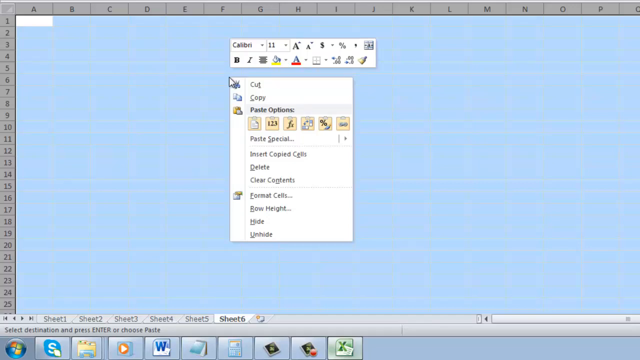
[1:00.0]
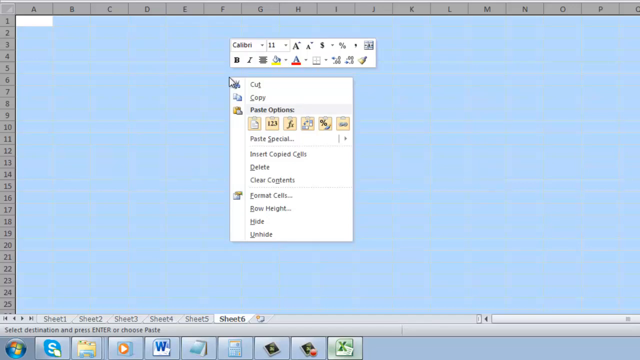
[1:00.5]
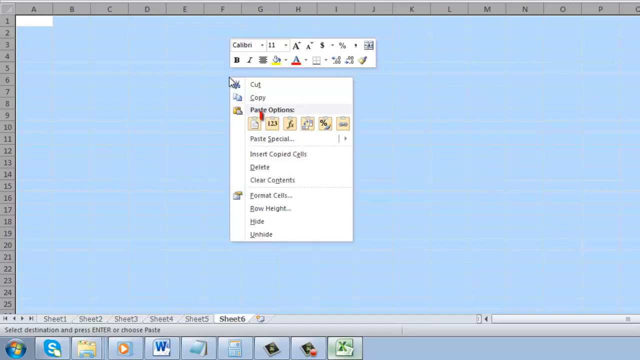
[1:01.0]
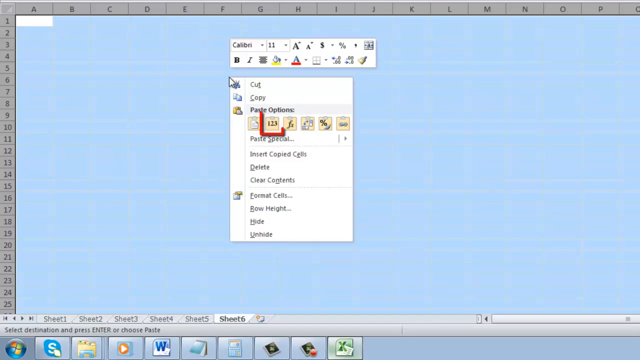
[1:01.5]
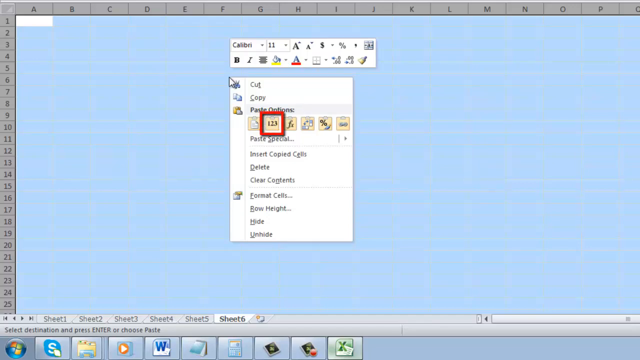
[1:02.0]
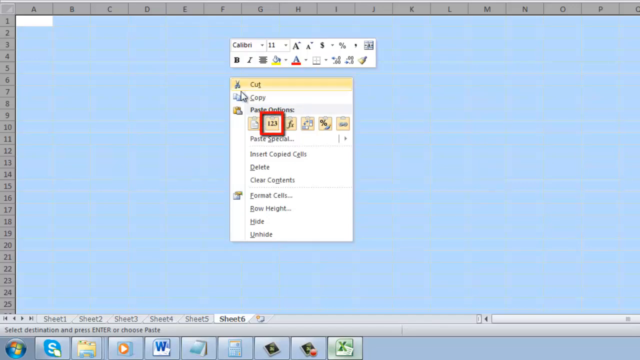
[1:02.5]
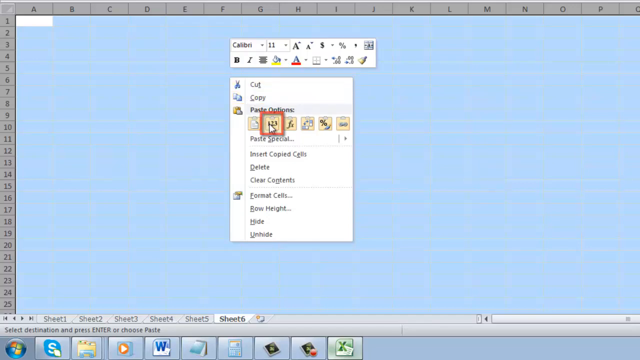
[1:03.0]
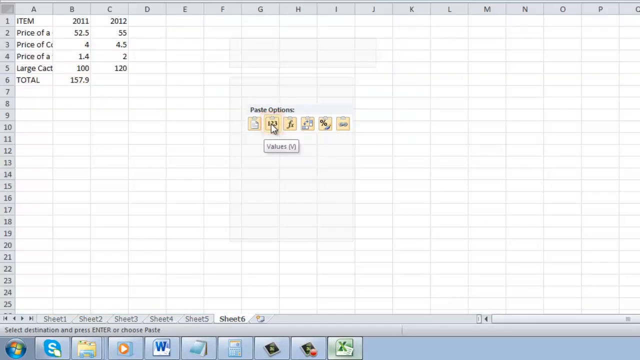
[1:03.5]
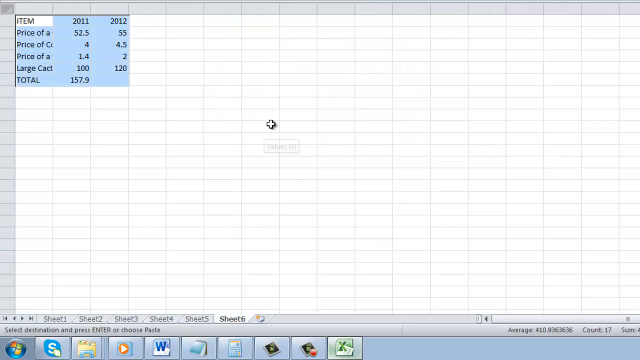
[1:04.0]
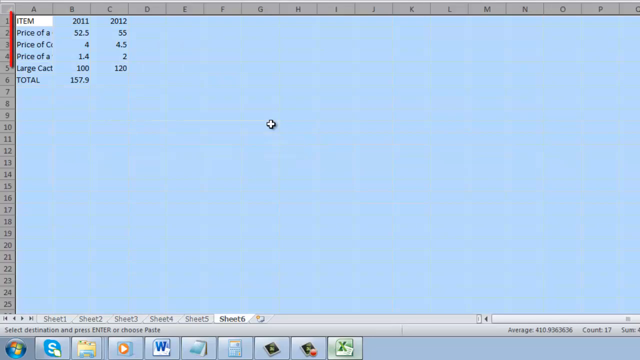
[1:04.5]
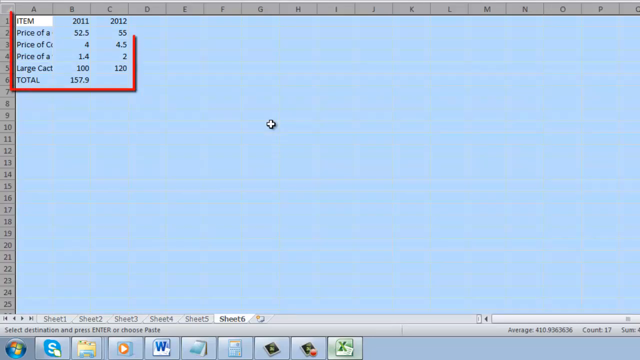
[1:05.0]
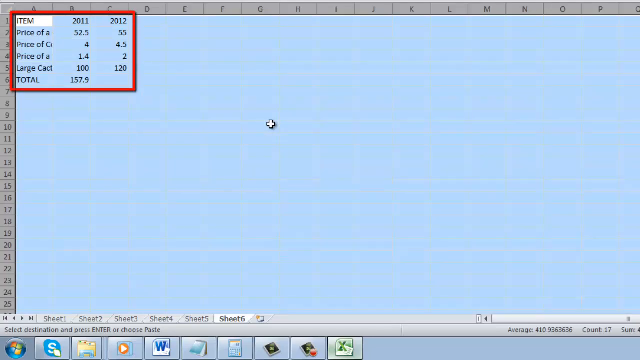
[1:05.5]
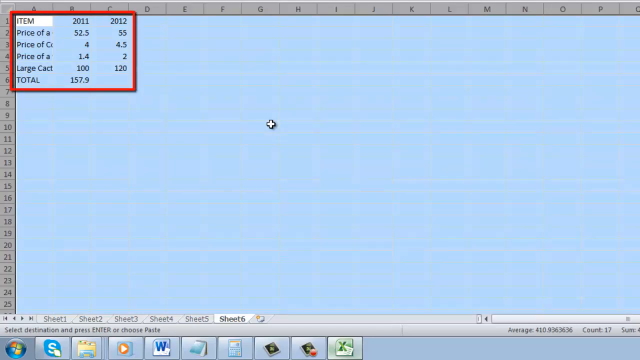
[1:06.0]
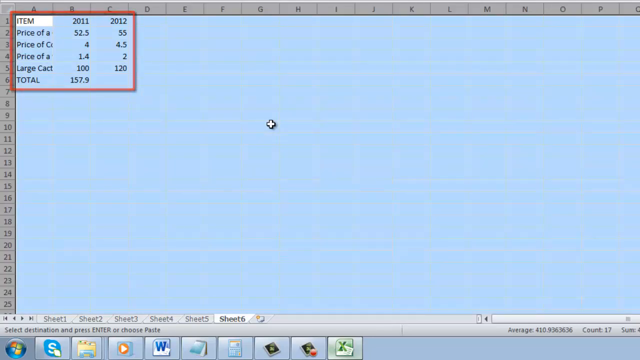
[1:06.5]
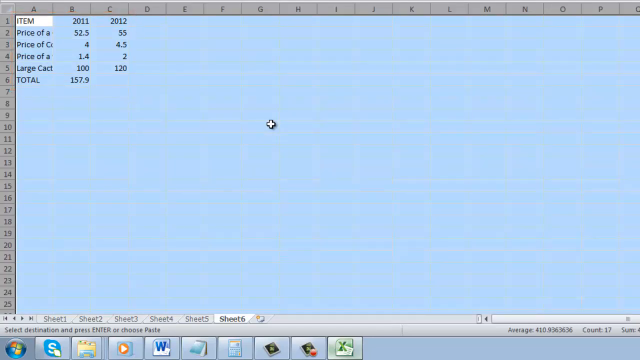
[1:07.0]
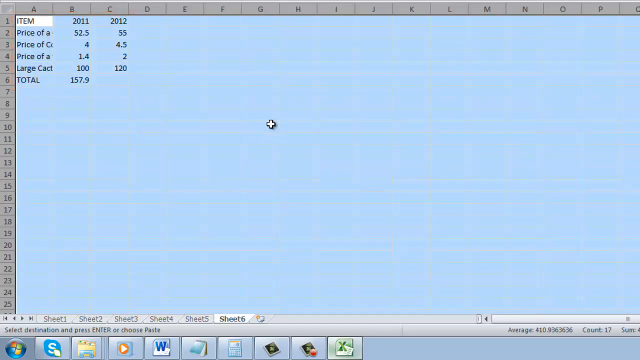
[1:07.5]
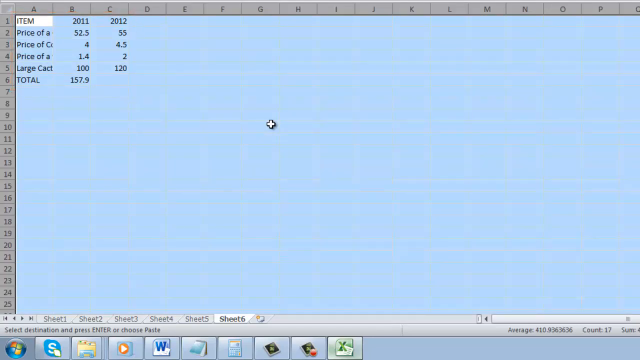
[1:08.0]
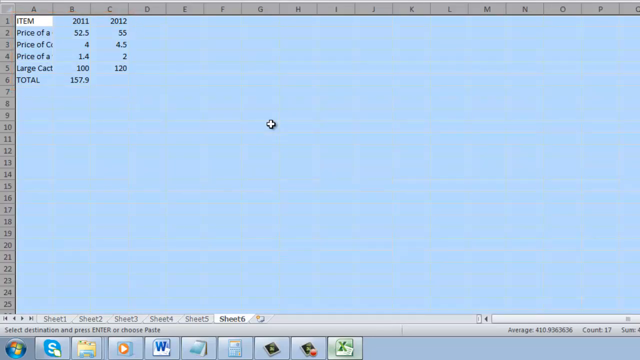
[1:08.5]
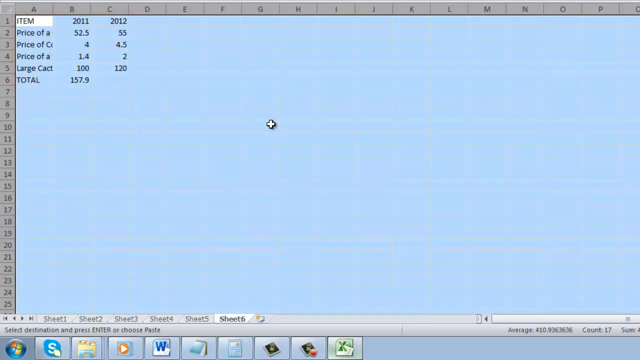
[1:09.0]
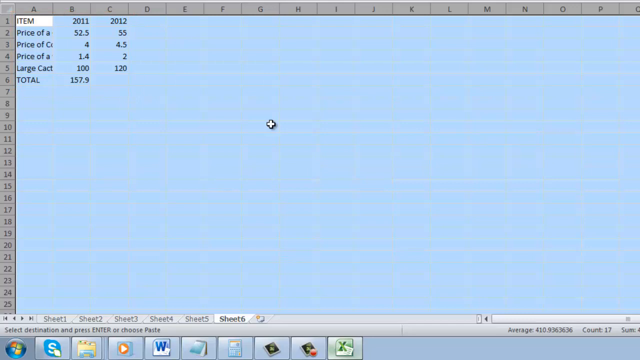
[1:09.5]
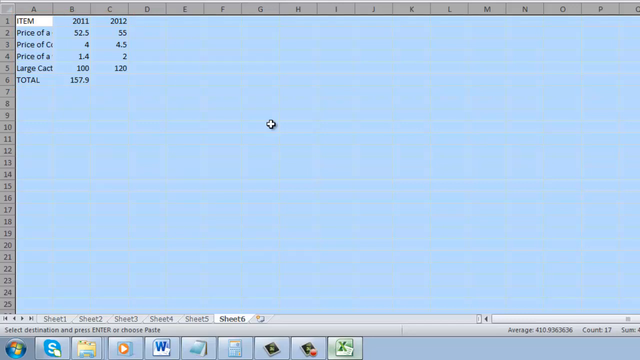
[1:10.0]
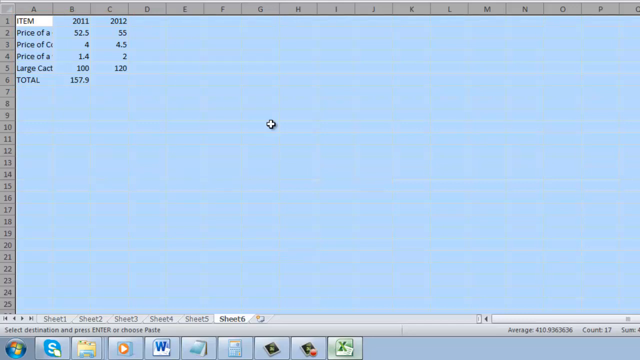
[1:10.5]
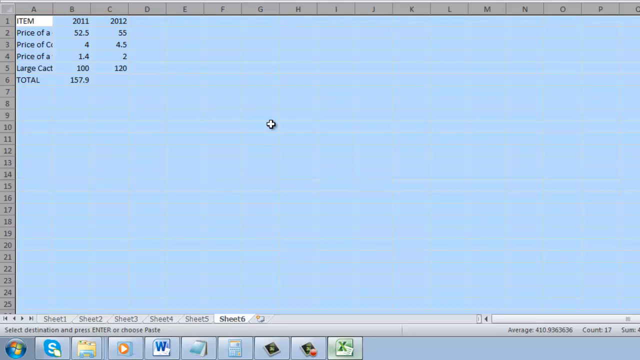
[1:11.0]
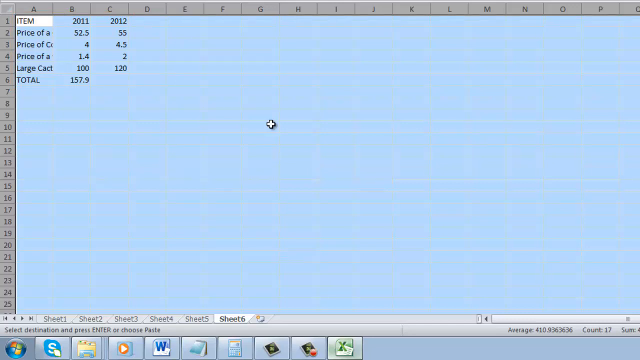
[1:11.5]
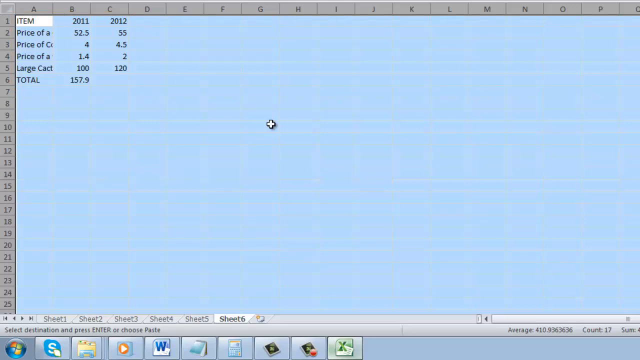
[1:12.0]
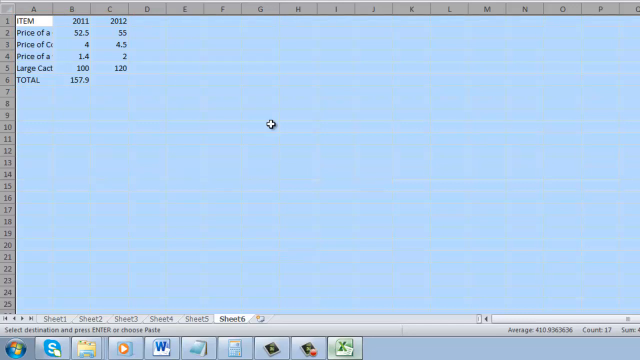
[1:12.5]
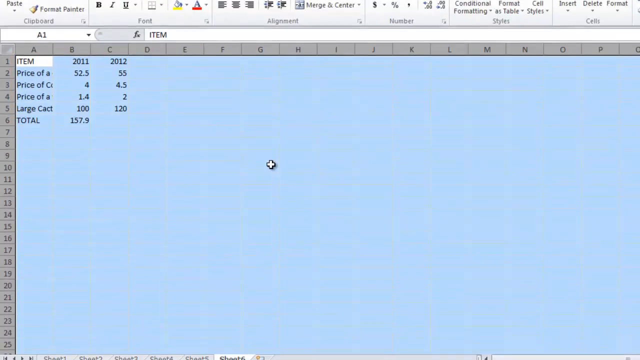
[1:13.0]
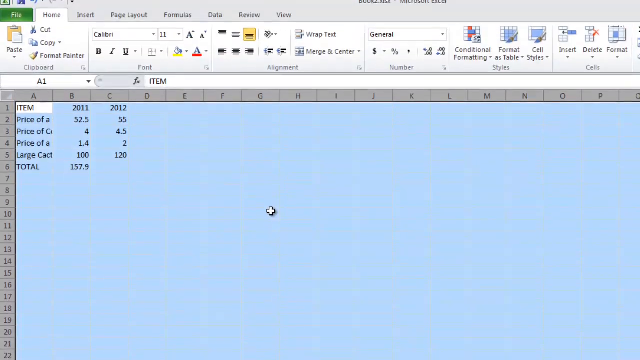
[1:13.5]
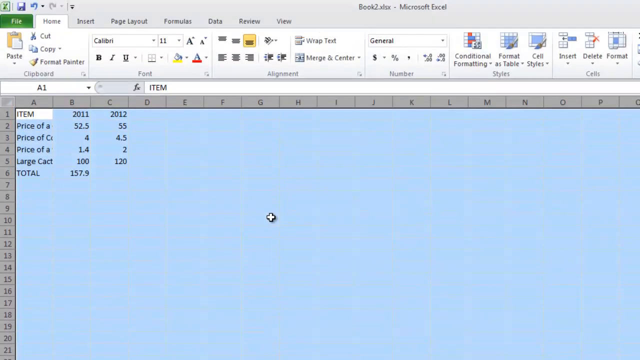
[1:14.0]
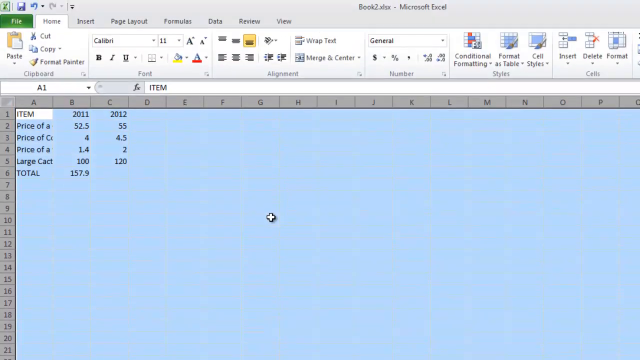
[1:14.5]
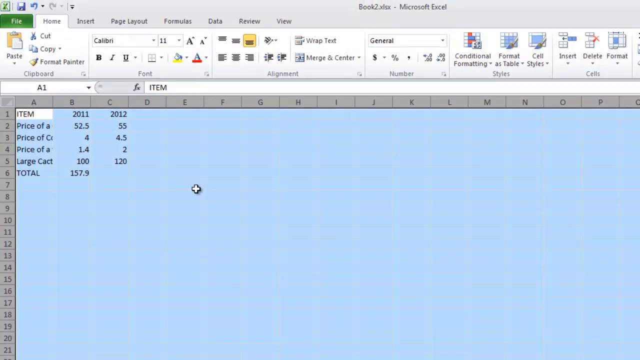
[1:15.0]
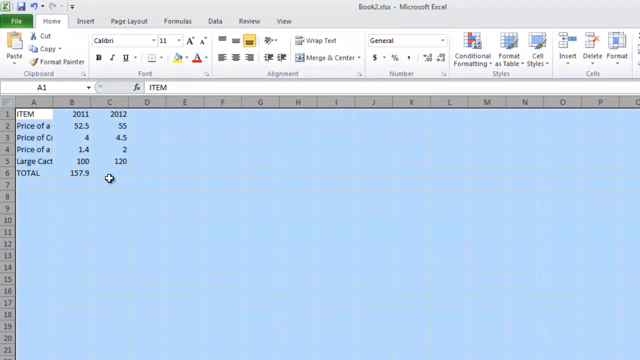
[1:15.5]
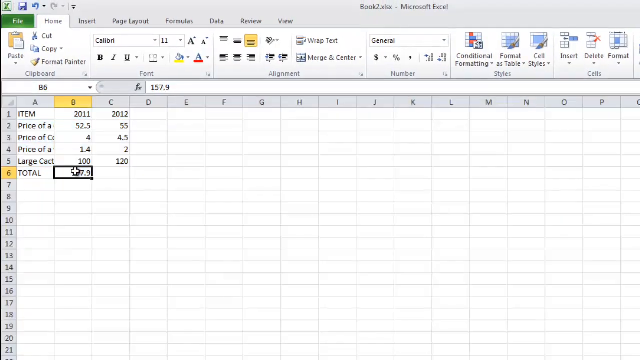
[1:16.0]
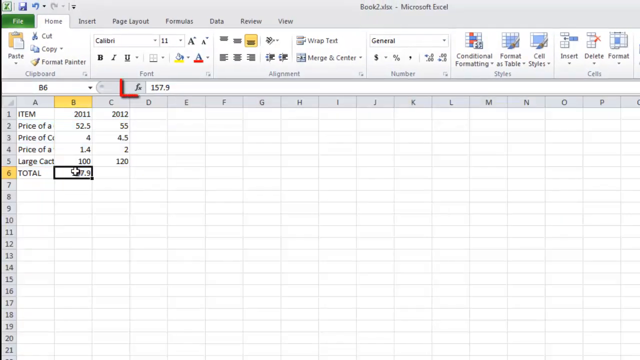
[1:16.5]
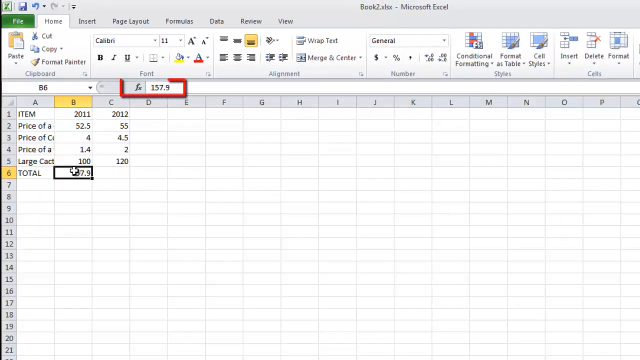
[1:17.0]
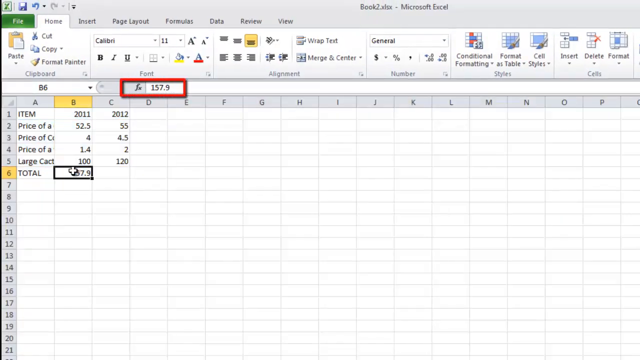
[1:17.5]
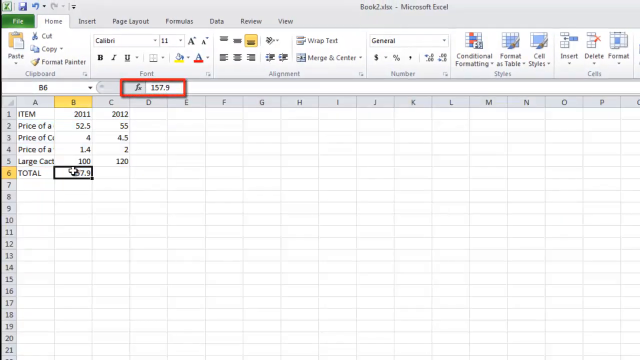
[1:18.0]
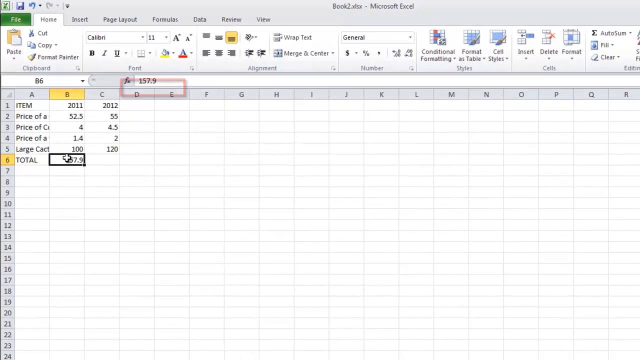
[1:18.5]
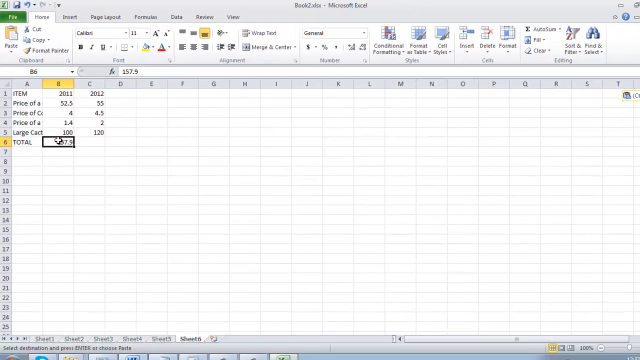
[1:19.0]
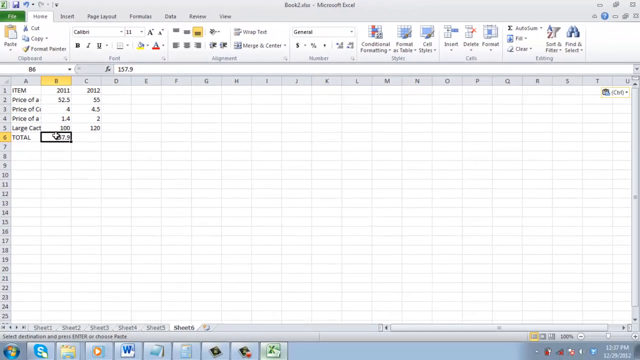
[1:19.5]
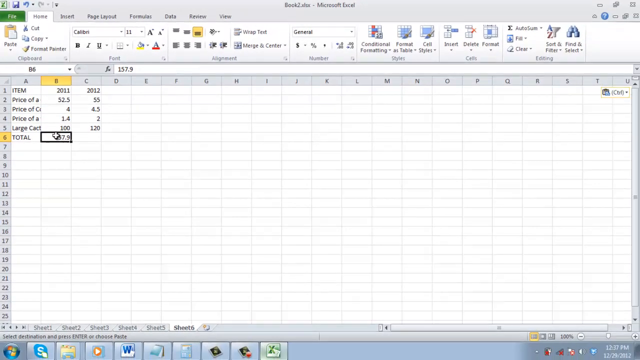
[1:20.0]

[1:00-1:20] The paste options are open, with everything highlighted in the background. The cursor clicks the numerical value option in the paste options, pasting the items and costs from 2011 and 2012 from sheet 1 onto sheet 6. The information is highlighted on sheet 6, entered in exactly the same style as on sheet 1. He then clicks the total below 2011, which appears in the function box, and highlights the total, 159.75, which is a numerical value rather than a function. It looks like the values were added together by hand and the number typed in.